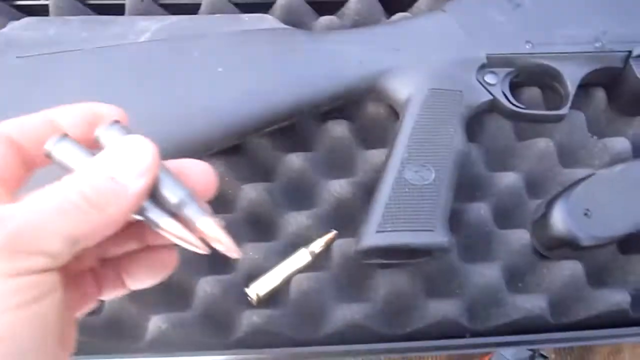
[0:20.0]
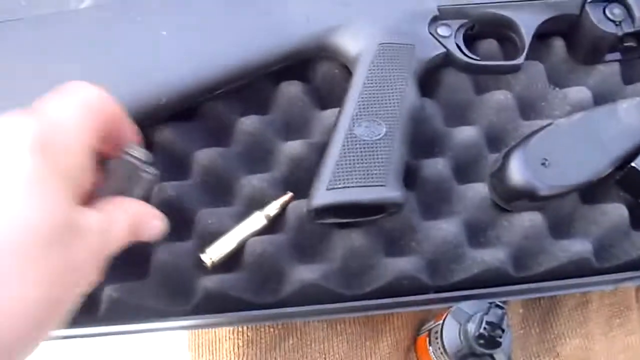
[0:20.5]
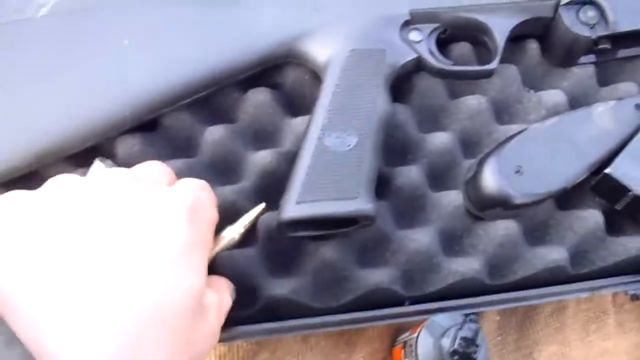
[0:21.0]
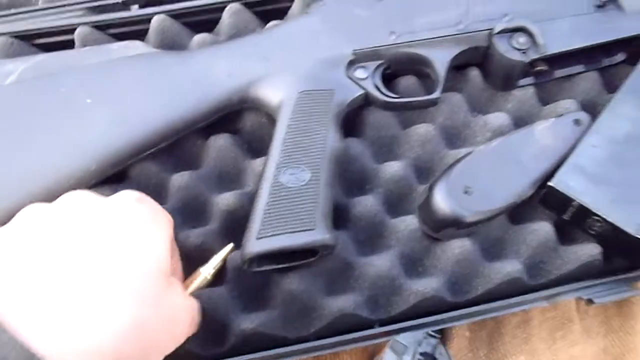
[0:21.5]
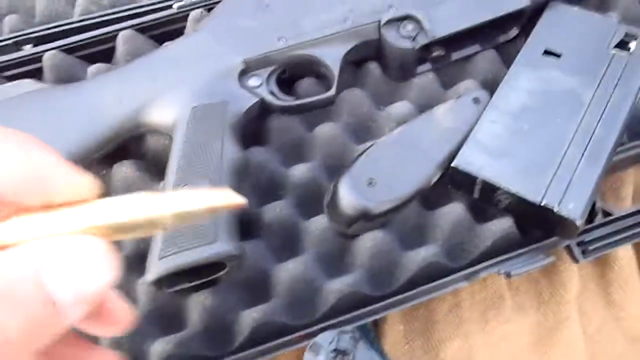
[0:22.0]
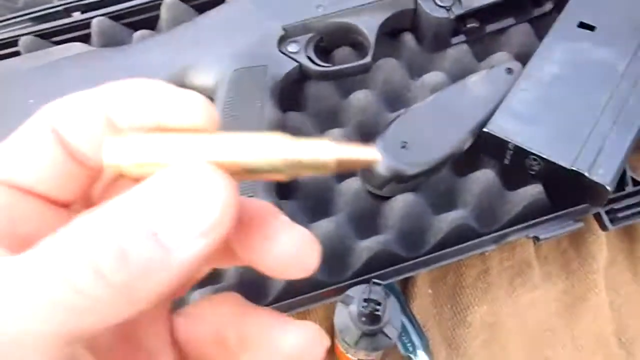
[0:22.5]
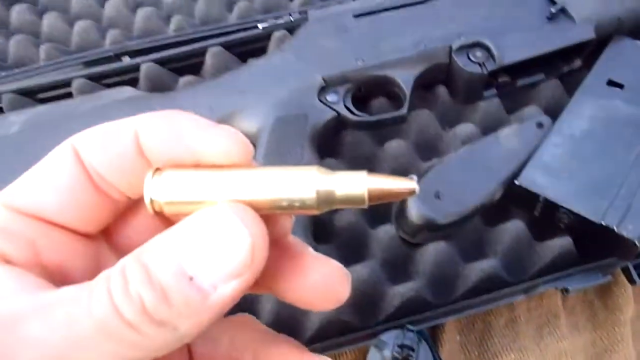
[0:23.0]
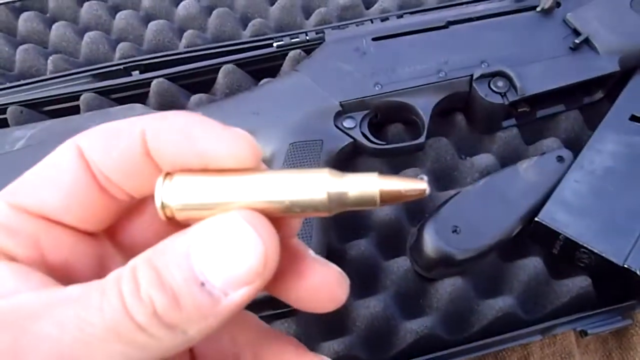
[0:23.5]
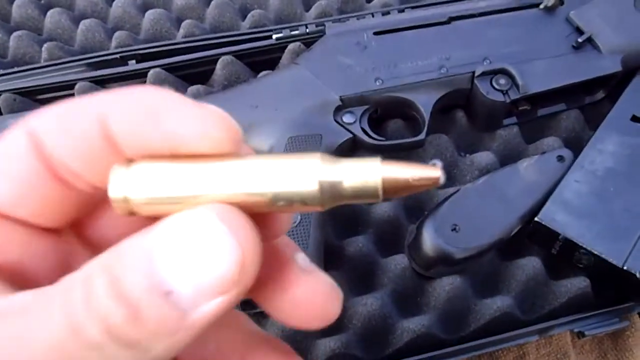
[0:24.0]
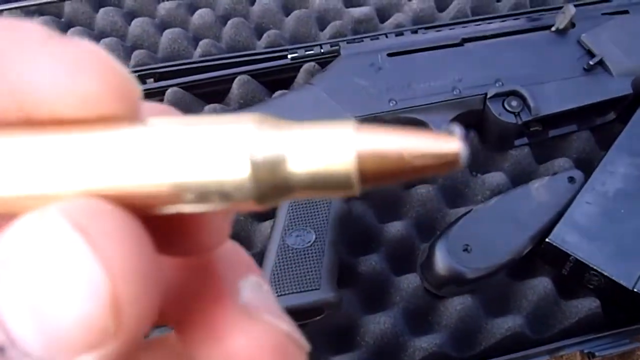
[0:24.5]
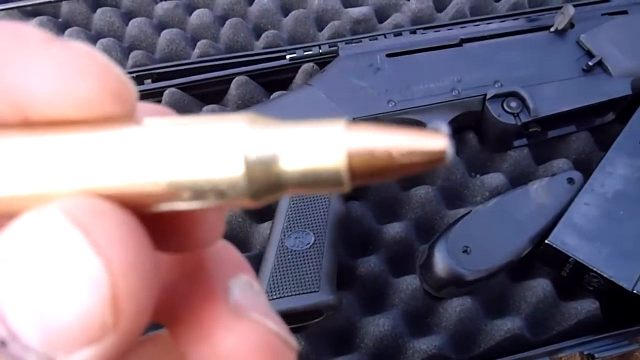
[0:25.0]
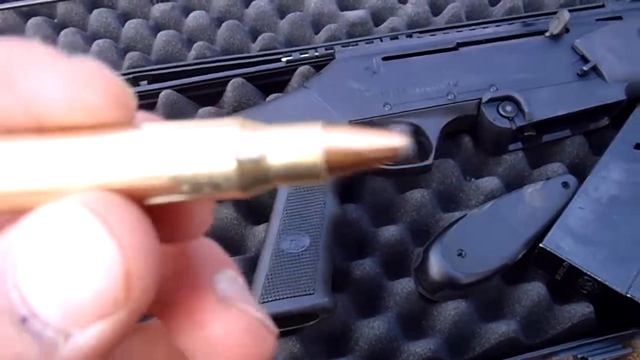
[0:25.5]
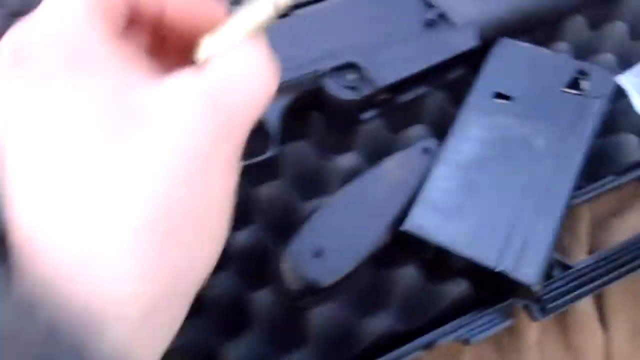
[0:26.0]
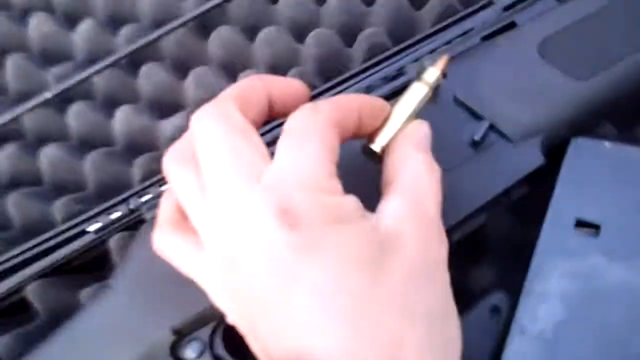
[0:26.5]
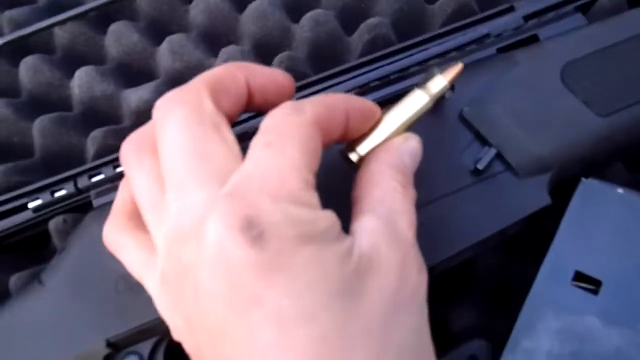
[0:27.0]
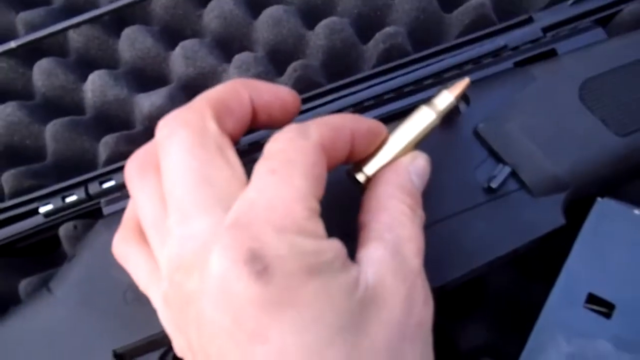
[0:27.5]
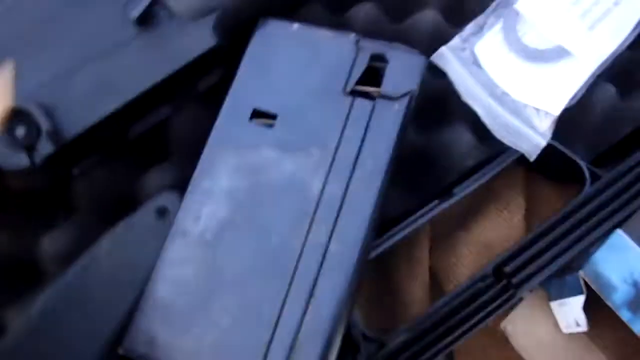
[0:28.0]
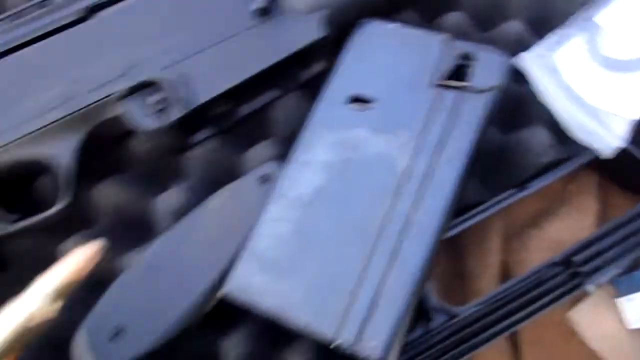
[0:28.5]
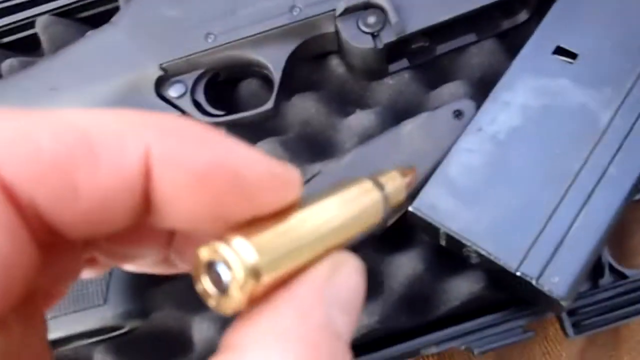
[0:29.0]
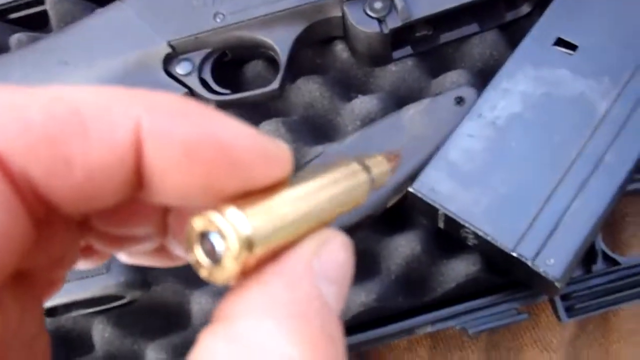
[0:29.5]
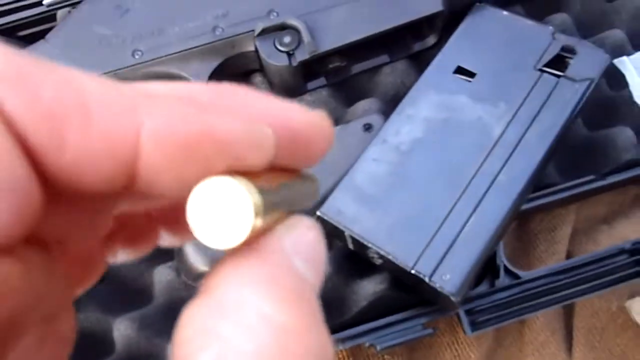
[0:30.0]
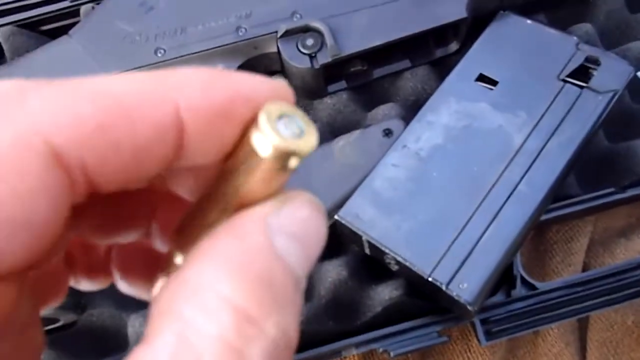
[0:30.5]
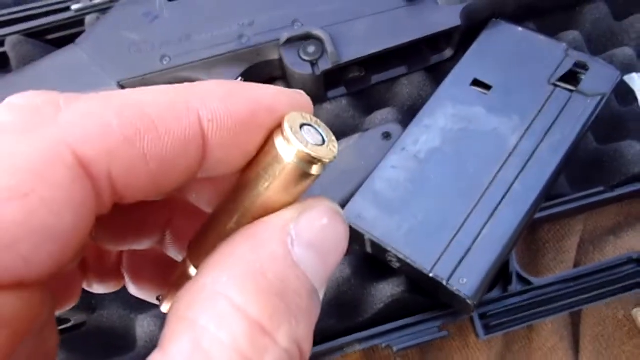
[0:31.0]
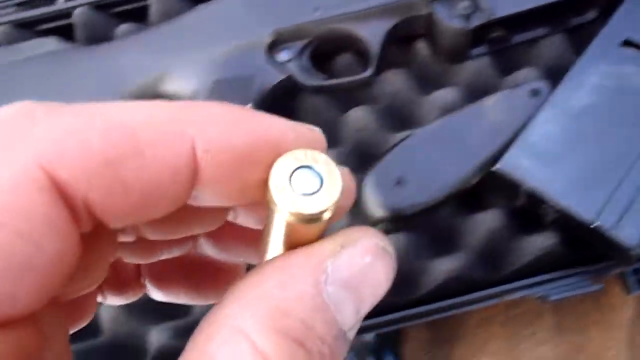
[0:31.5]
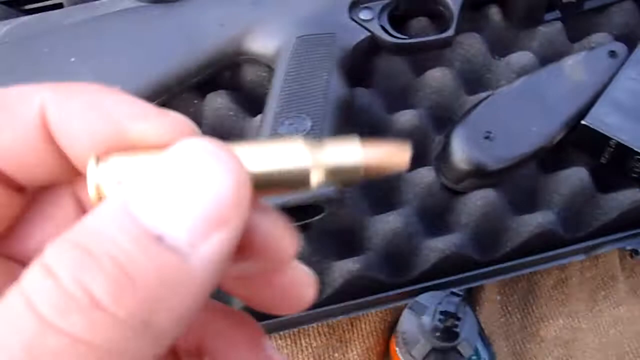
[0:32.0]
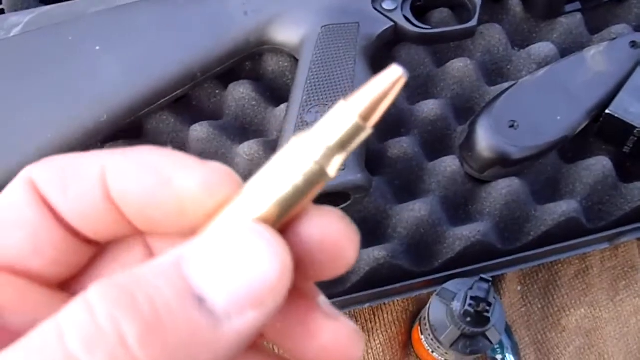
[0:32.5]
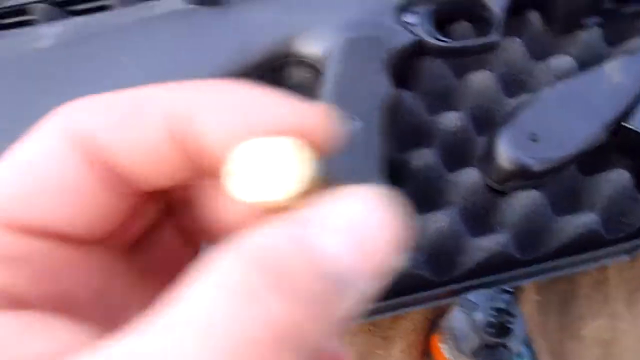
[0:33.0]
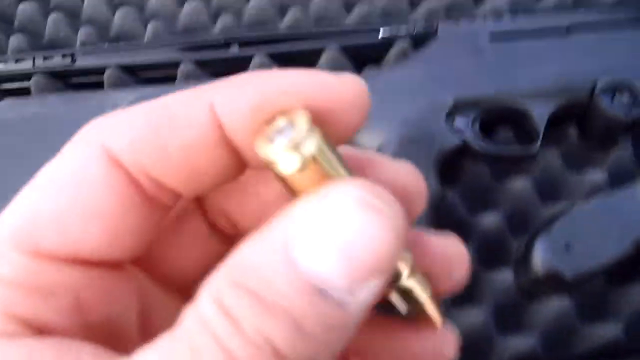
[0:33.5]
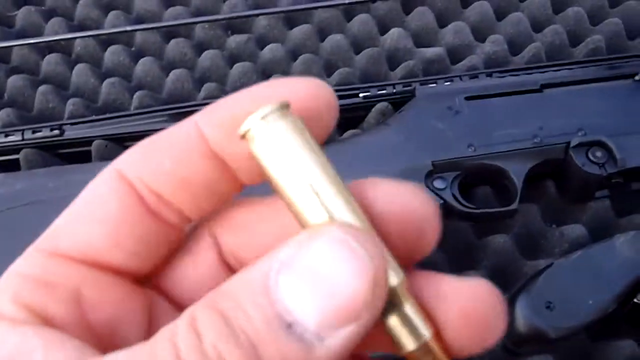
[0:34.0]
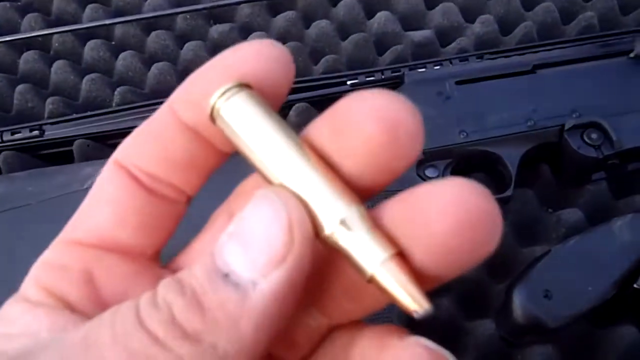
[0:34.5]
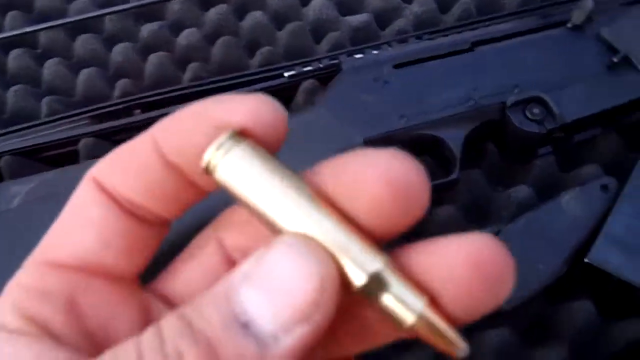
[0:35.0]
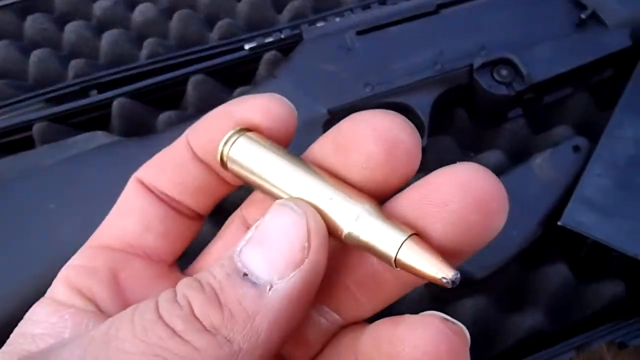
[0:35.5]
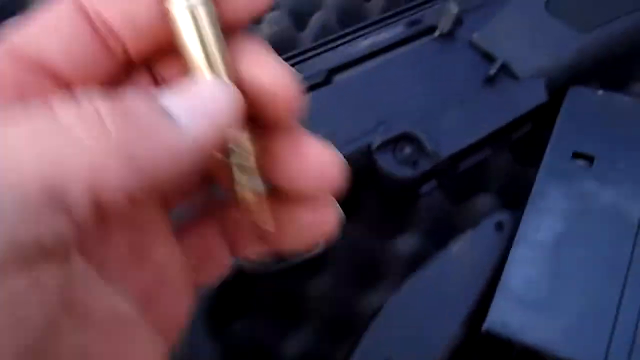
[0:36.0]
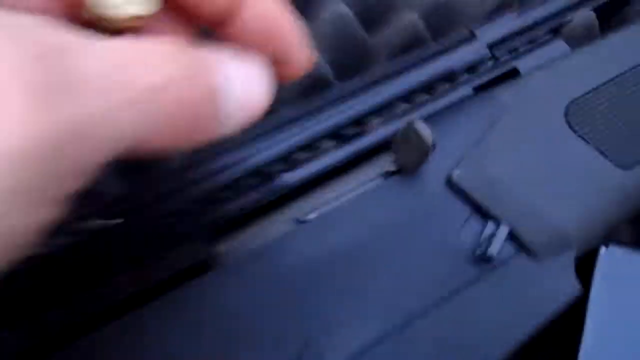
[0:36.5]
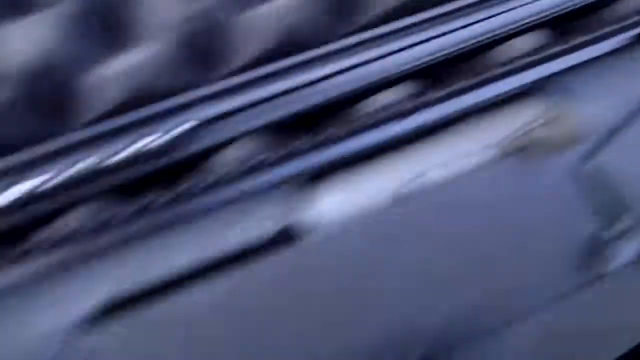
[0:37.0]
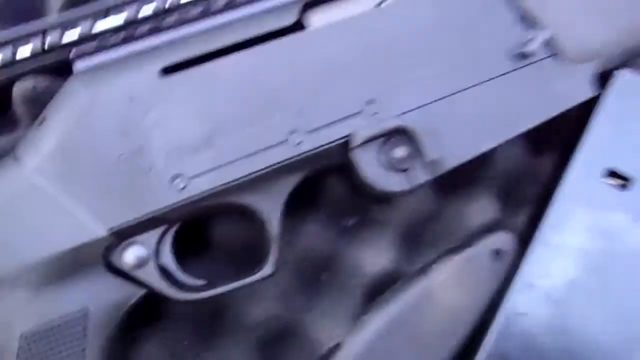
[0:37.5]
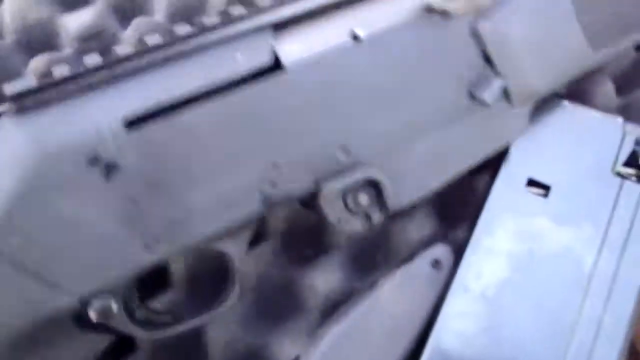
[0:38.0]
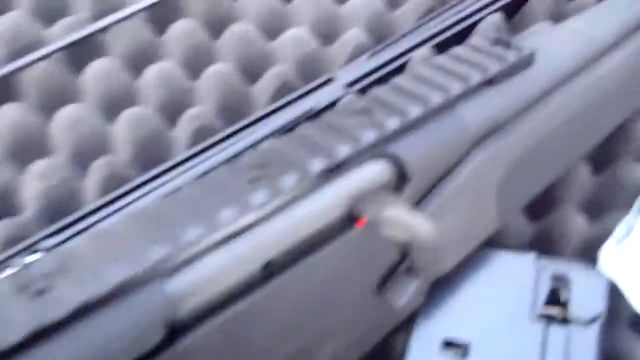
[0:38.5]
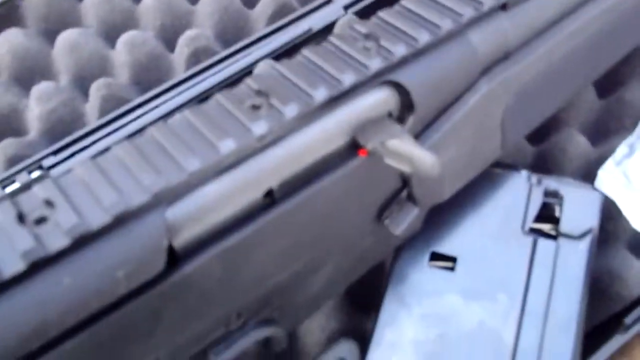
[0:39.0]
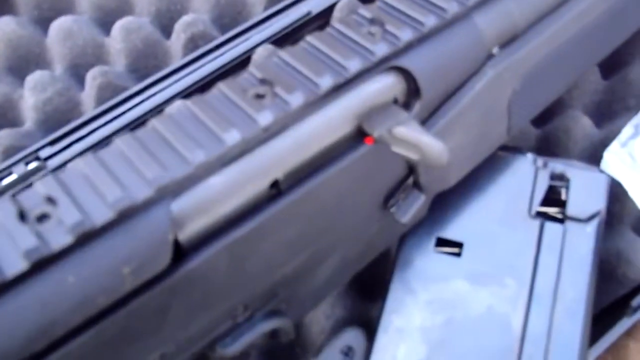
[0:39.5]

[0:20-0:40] The man picks up the ammunition, then picks up another one, apparently a different piece of ammunition. He places it next to the gun, on the rifle, and fidgets with this piece of ammunition. He then reaches for the gun and picks it up to show the firing chamber. He seems younger, maybe 25 to 30 years old, and Caucasian American. The gun is laying in the case while he showcases the ammo.